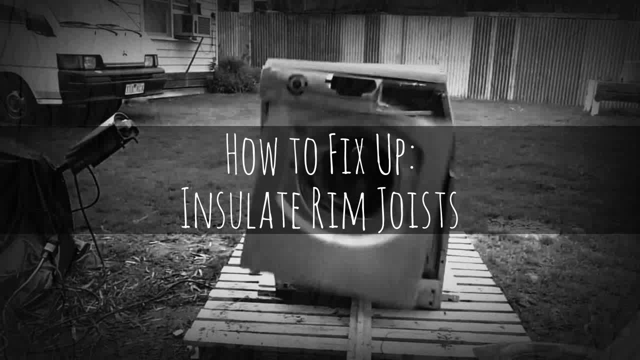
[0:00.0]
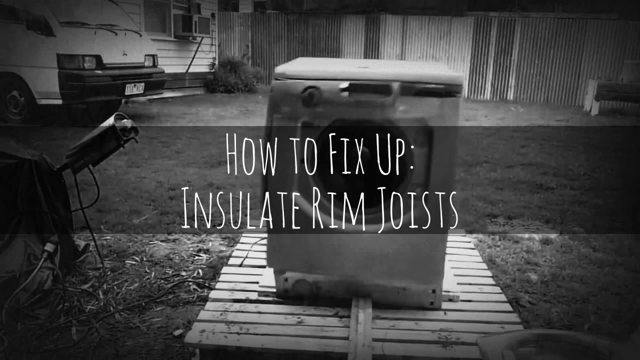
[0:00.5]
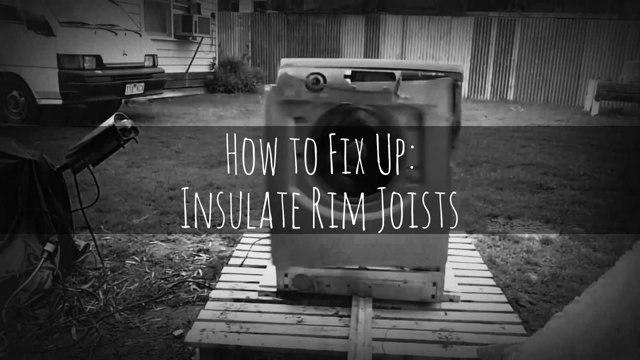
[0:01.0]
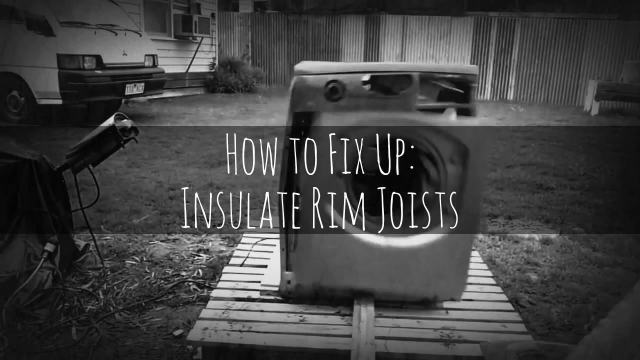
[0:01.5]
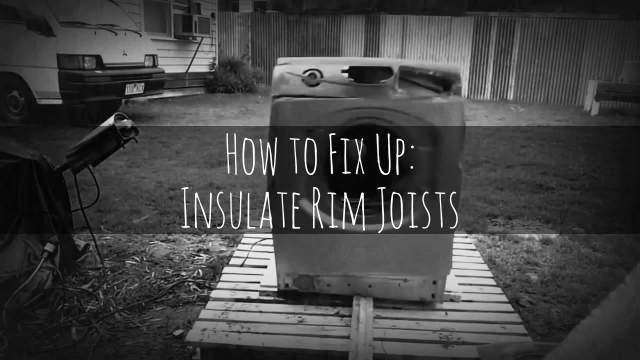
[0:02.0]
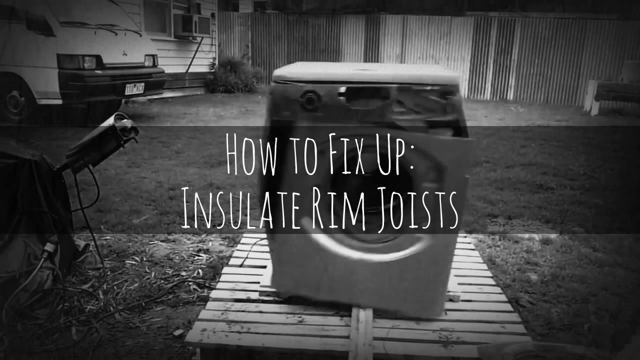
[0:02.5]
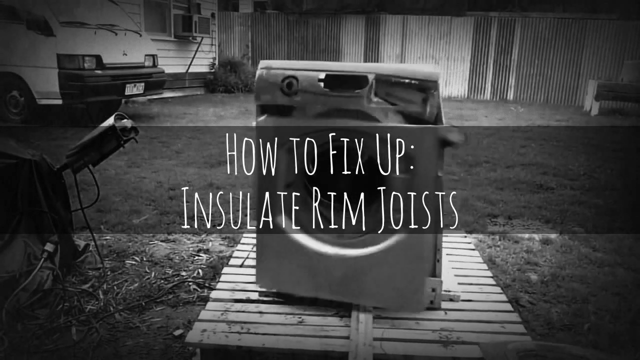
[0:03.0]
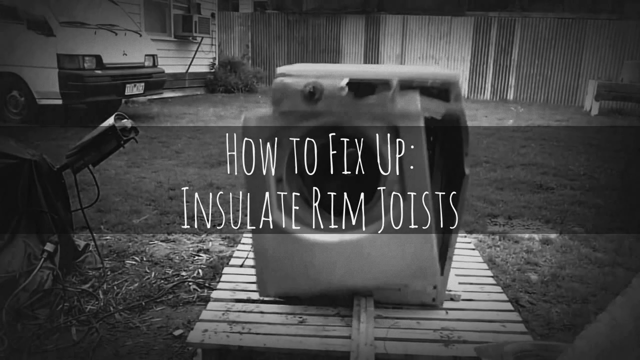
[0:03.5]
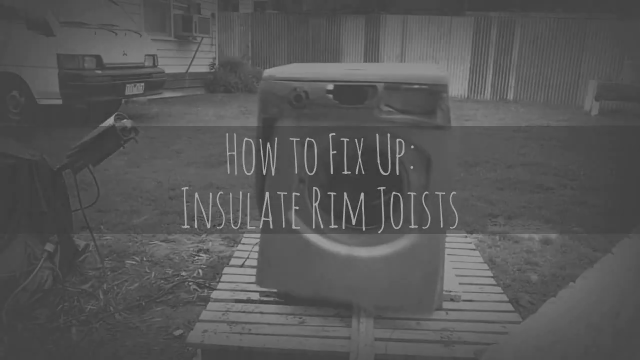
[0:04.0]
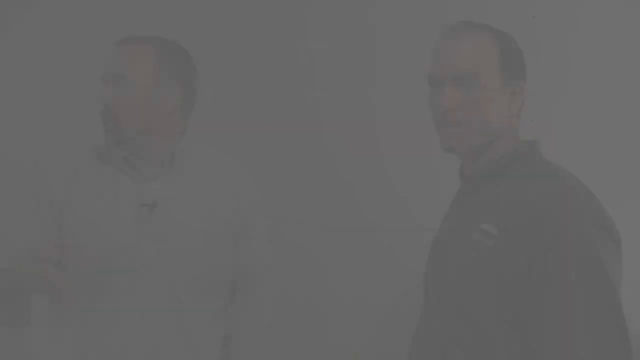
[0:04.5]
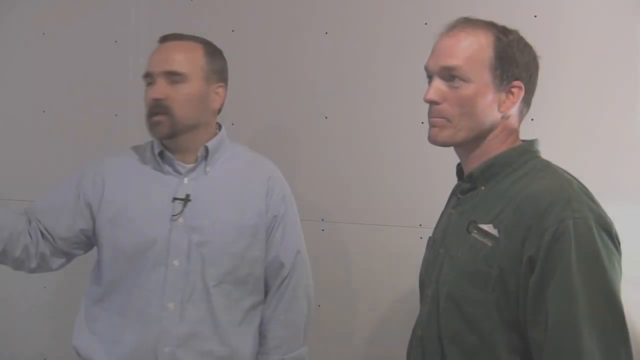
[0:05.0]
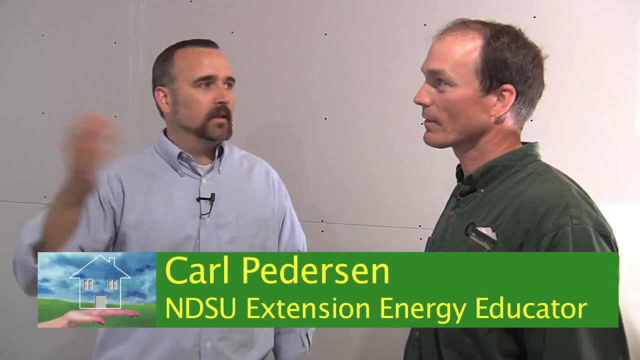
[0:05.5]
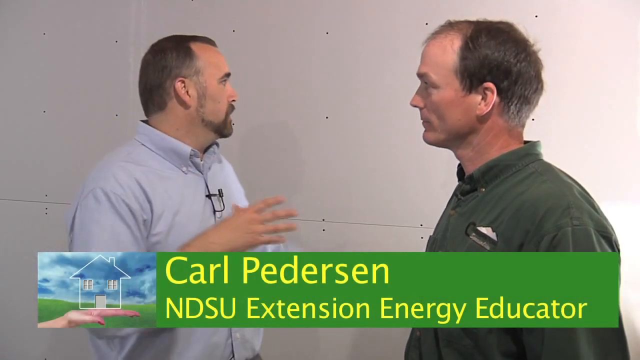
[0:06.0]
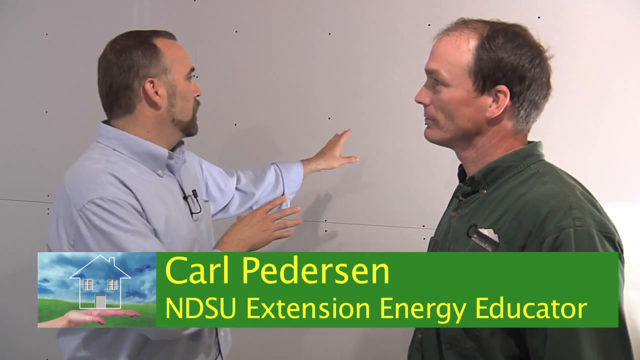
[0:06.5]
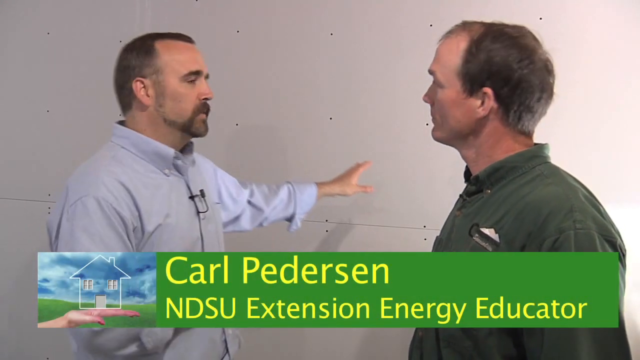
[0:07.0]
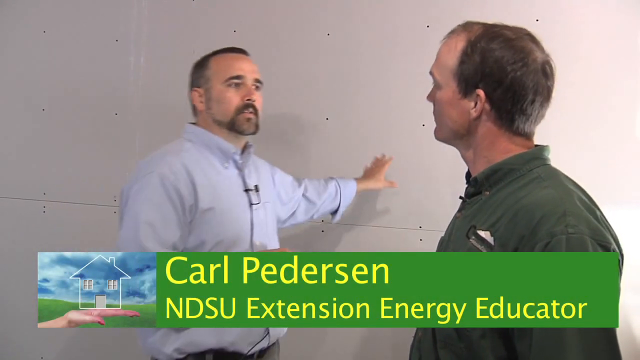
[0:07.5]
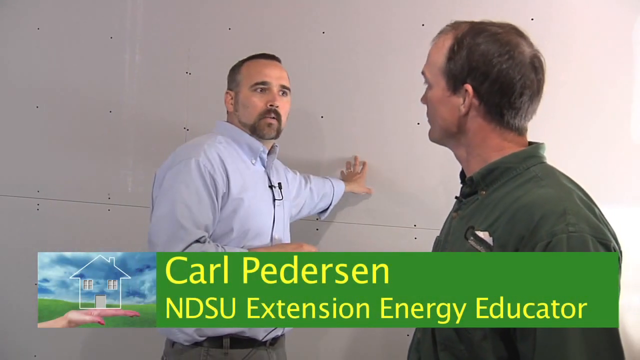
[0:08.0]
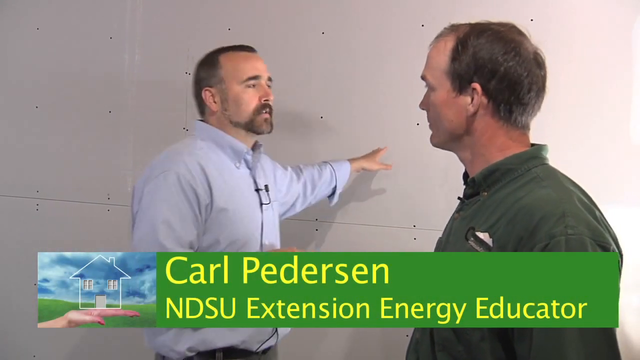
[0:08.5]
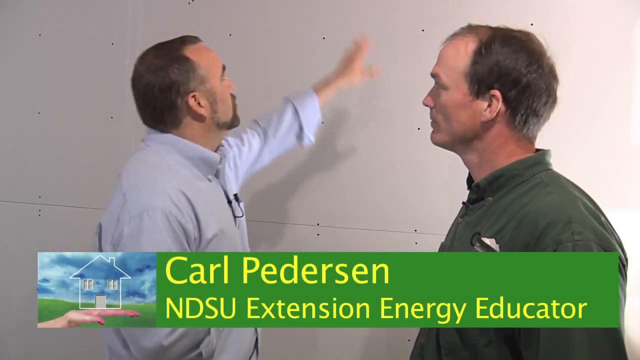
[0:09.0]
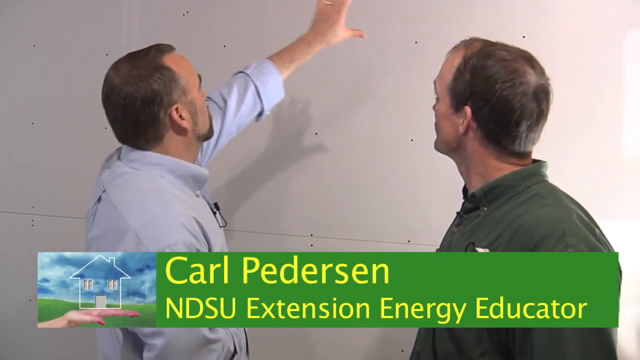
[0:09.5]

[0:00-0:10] A square object dances around in front of a black and white picture in the background showing a minibus, a house and a demarcation of corrugated iron. The video then shows two men, one explaining something to the other. The man explaining wears a blue shirt with a mic attached to it, and the other man is dressed in a gray shirt. Text at the bottom of the screen says "Kyle Patterson NDSU Extension Energy Educator". A man in a green shirt looks like he is actively listening.